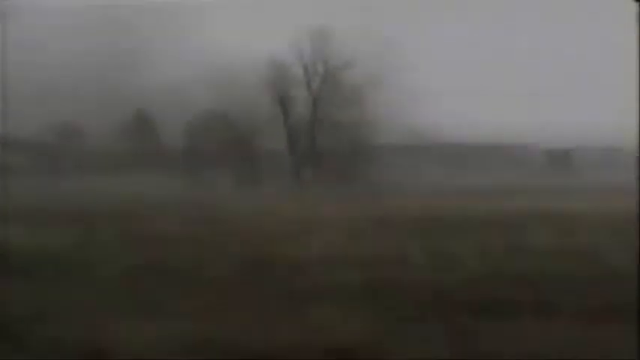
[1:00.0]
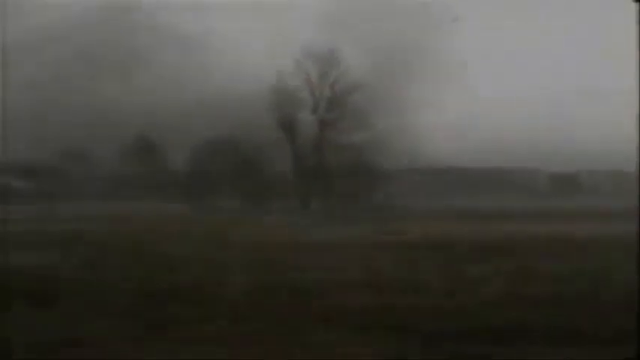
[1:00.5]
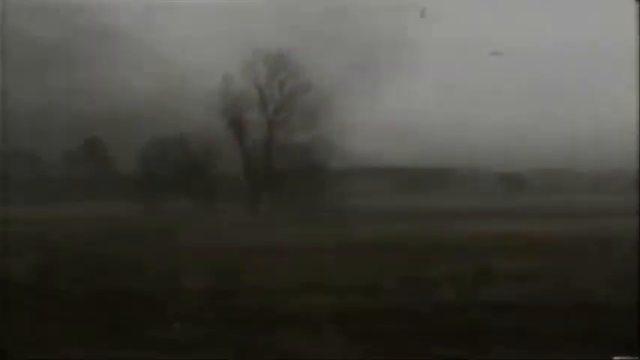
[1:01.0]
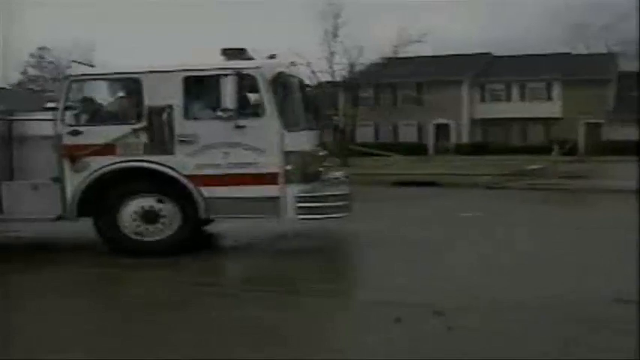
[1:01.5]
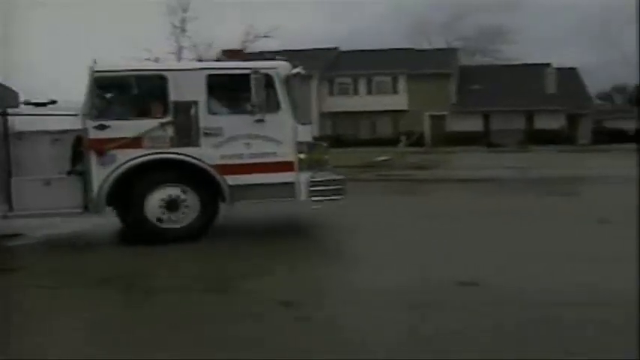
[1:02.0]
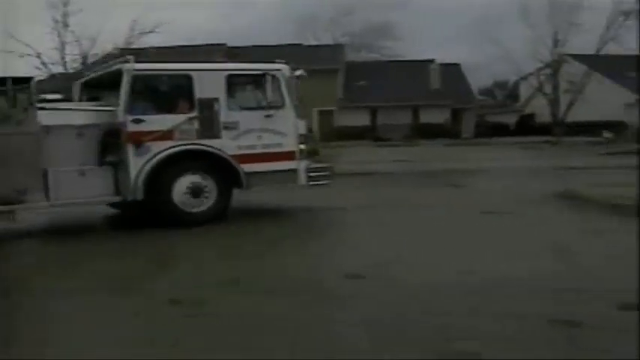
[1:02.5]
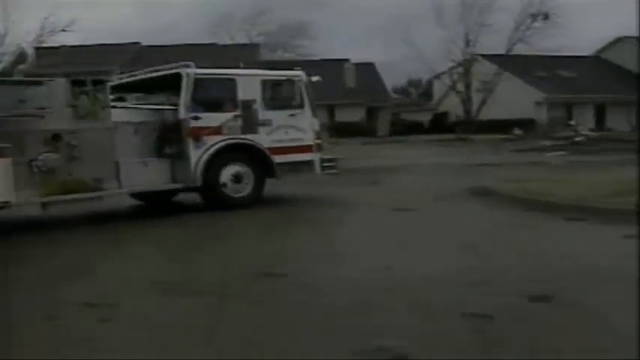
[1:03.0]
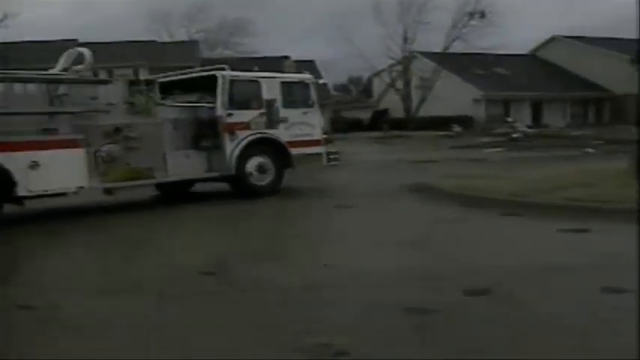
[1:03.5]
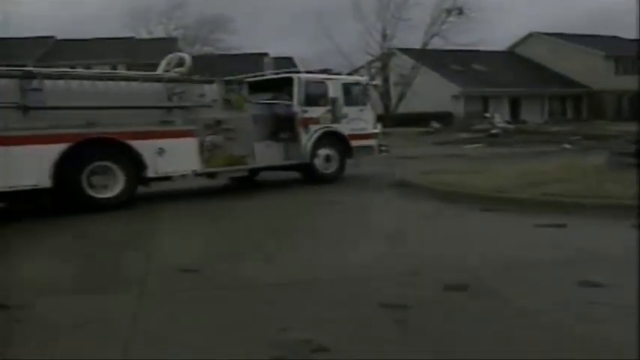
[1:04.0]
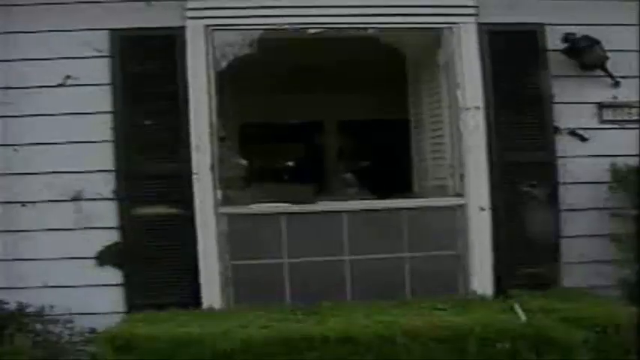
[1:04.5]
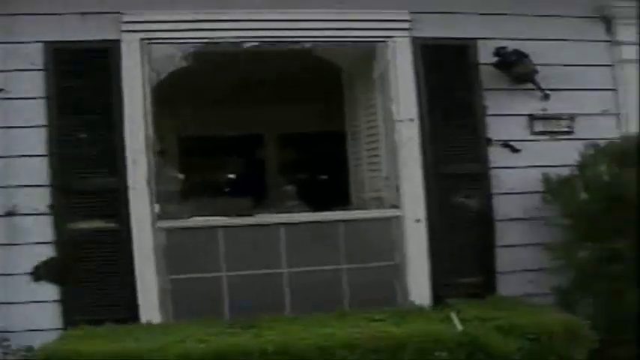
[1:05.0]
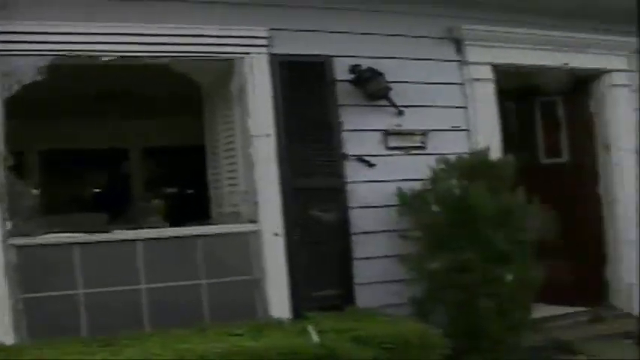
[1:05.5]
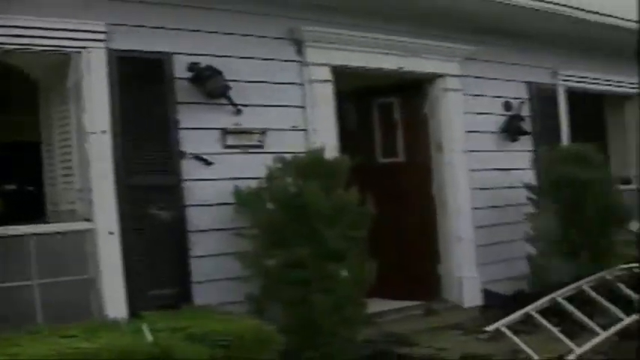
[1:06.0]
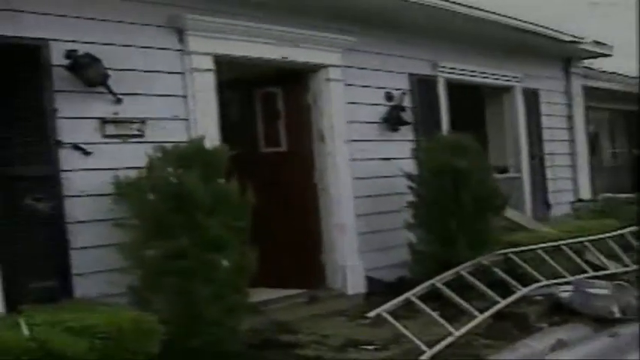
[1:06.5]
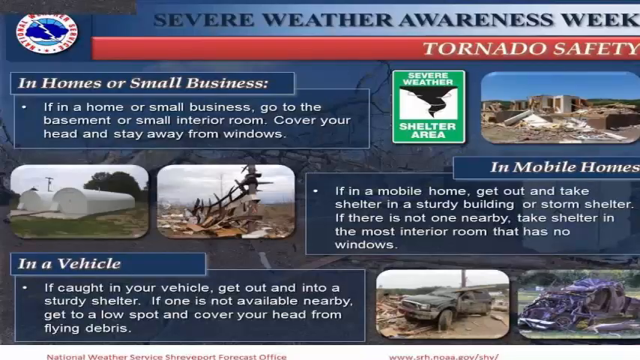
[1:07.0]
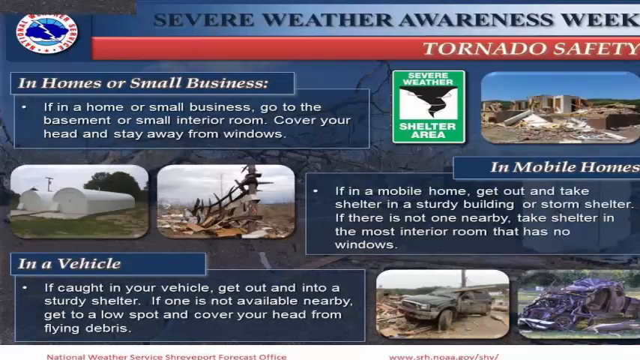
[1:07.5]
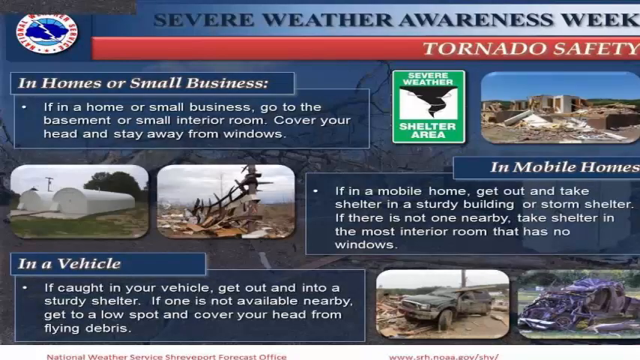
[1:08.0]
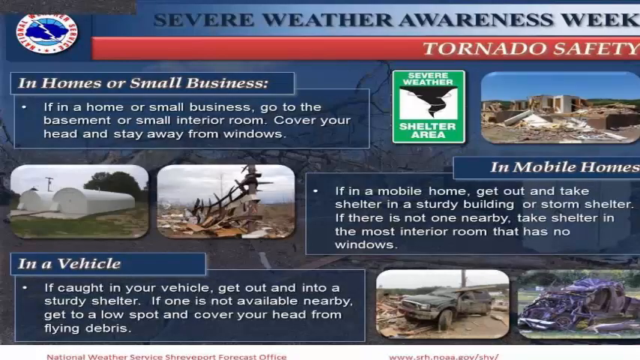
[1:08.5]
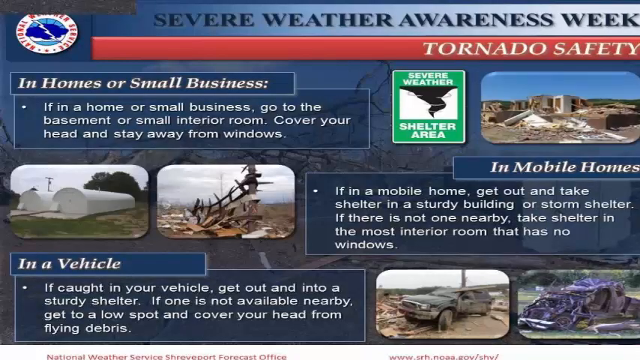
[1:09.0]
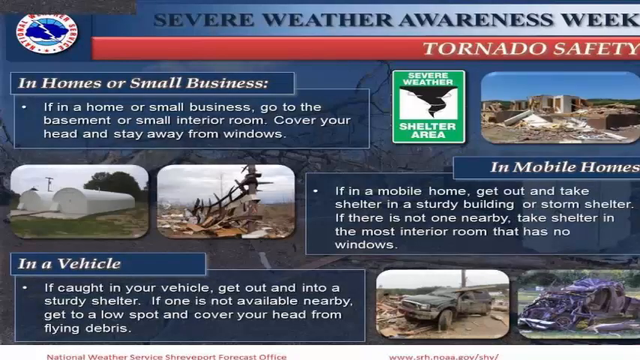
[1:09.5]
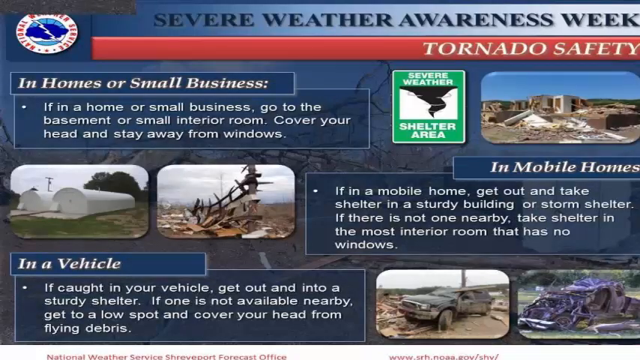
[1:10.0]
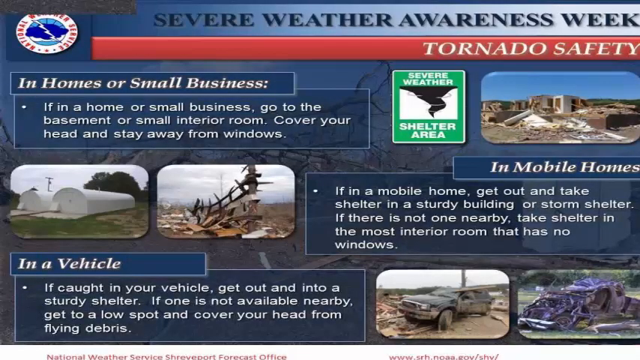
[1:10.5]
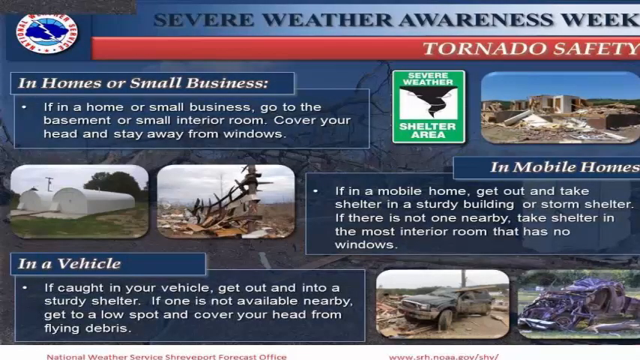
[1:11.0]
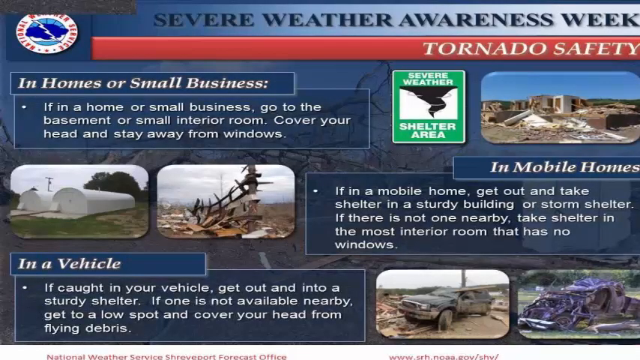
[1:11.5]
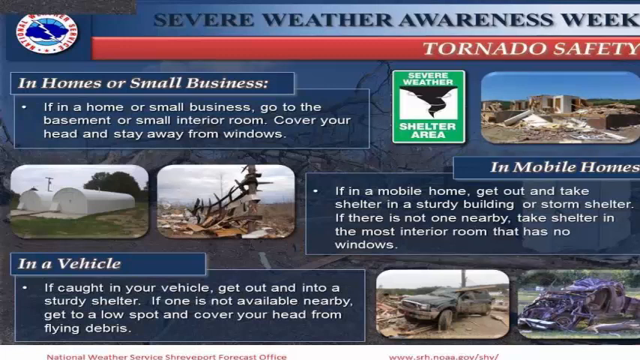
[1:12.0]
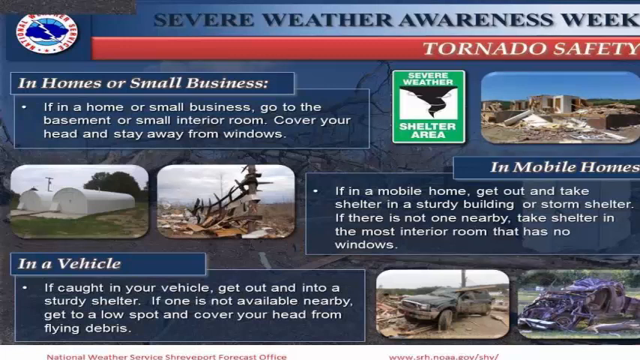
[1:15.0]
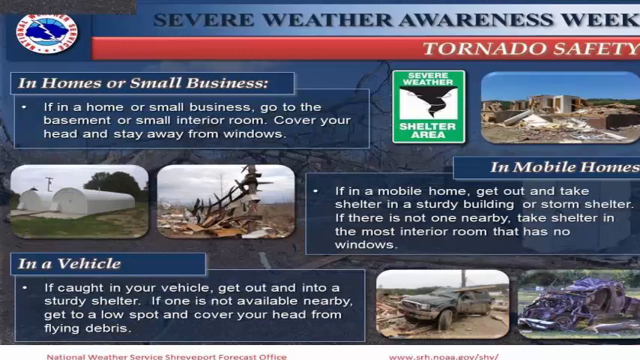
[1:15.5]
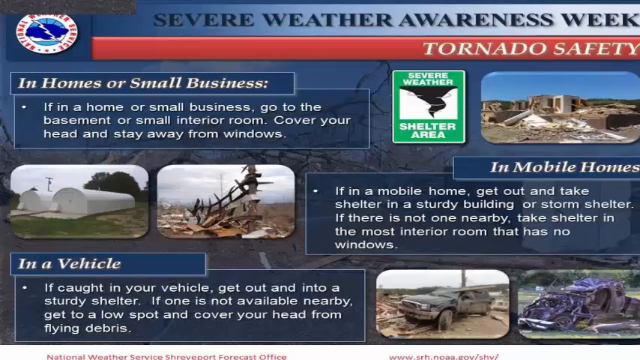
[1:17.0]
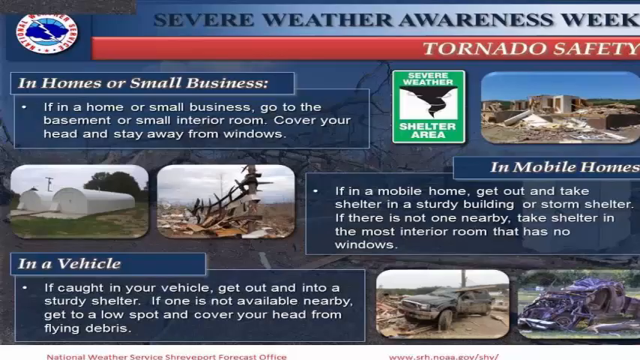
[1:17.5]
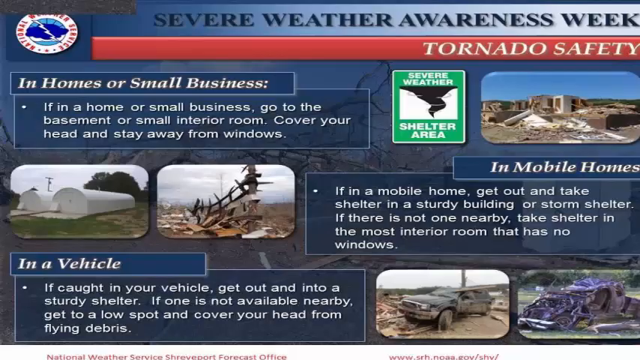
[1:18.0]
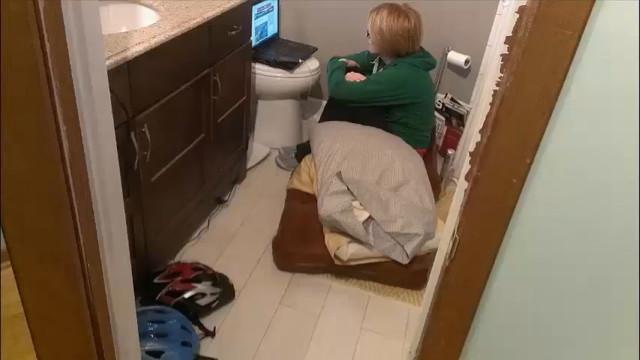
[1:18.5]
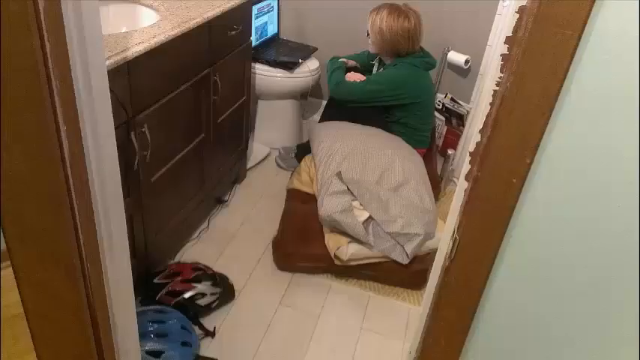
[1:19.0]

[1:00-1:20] Another tornado forms across the field in the distance, recorded by a person who appears to be standing in their home. The video cuts to a firetruck rolling down a residential street, with a greenhouse behind it. The sky is very dark, and from the damage to the houses in the neighborhood, a storm or tornado appears to have rolled through. Broken windows, destroyed lamps in front of houses, doors blown wide open and ladders on the ground are visible. The video then cuts to an infographic that reads "Severe weather awareness week tornado safety," with sections for homes or small businesses ("If in a home or a small business go to the basement or small interior room. Cover your head and stay away from windows"), mobile homes ("If in a mobile home get out and take shelter in a sturdy building or storm shelter. If there is not one nearby take shelter in the most interior room that has no windows") and vehicles ("If caught in a vehicle get out into a sturdy shelter if one is not available nearby. Get to a low spot and cover your head"). There are images of buildings, mobile homes and vehicles destroyed by tornadoes, and an image of what the sign for a severe weather designated shelter area looks like. The video then cuts to an image of a woman sitting on the floor of her bathroom on some kind of cushion or air mattress with pillows, watching something on a laptop that is on the toilet.